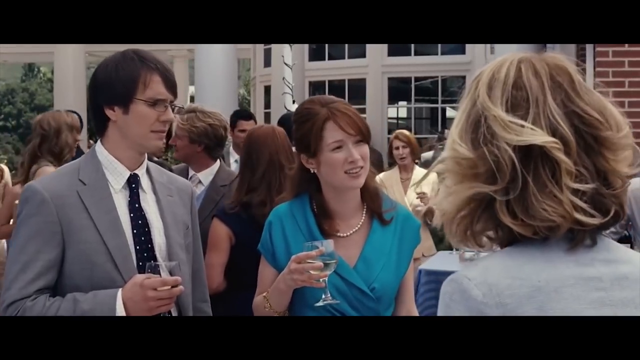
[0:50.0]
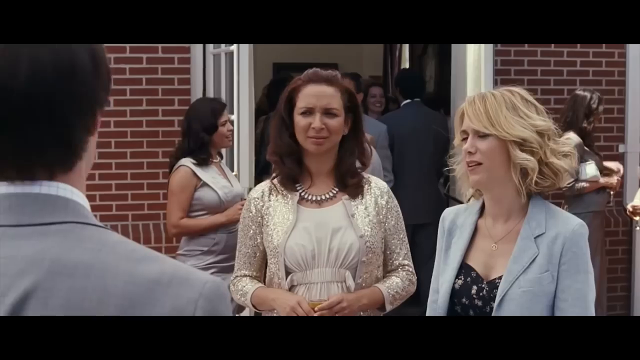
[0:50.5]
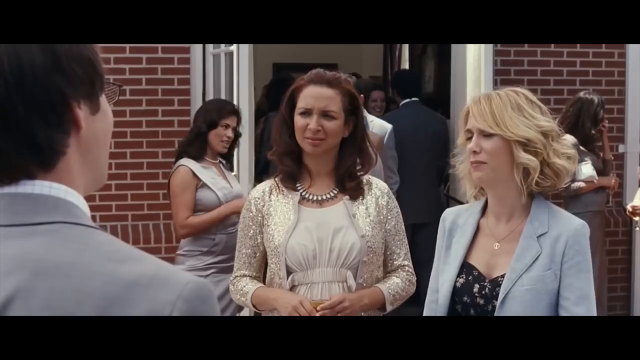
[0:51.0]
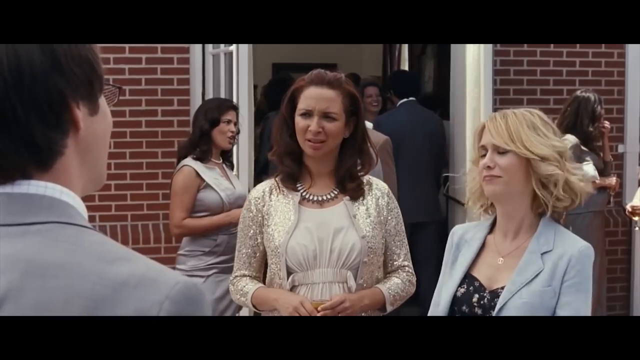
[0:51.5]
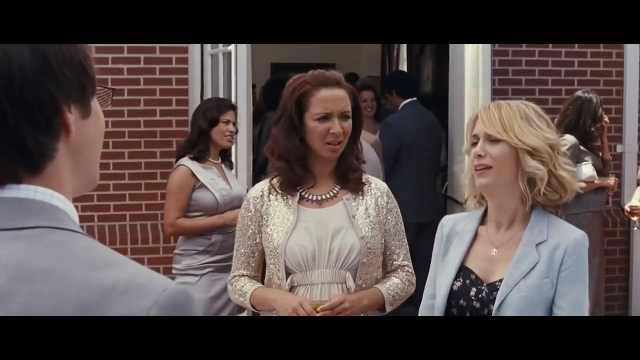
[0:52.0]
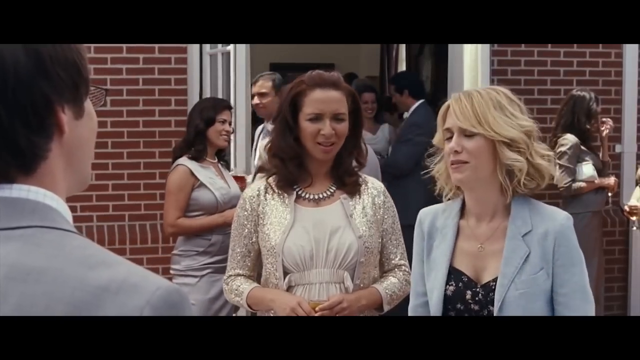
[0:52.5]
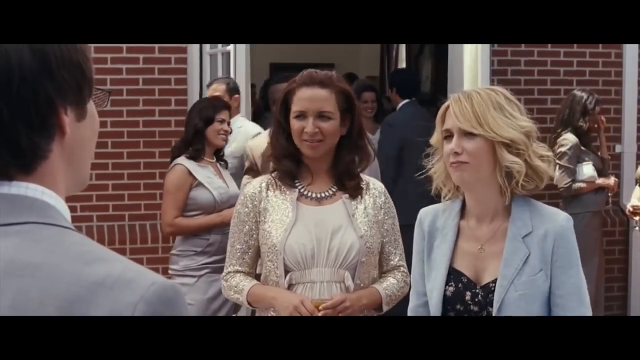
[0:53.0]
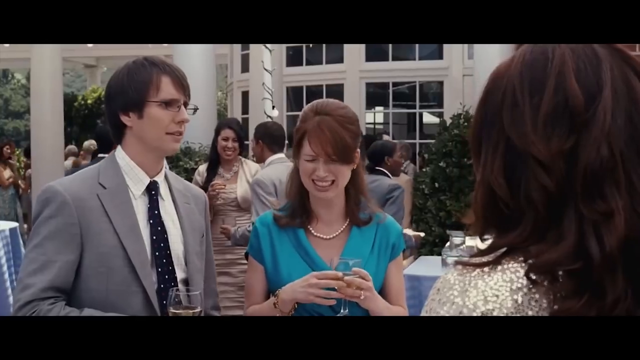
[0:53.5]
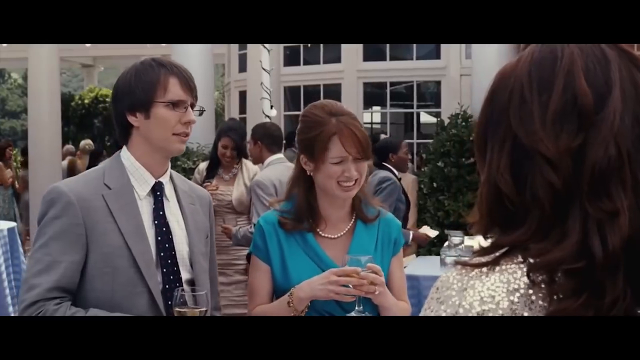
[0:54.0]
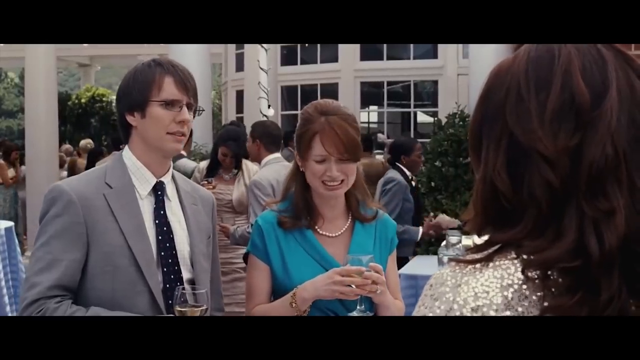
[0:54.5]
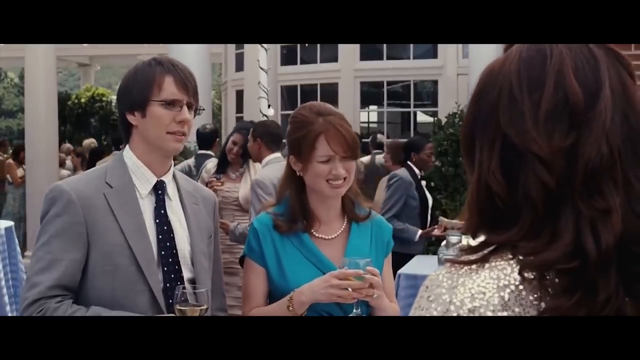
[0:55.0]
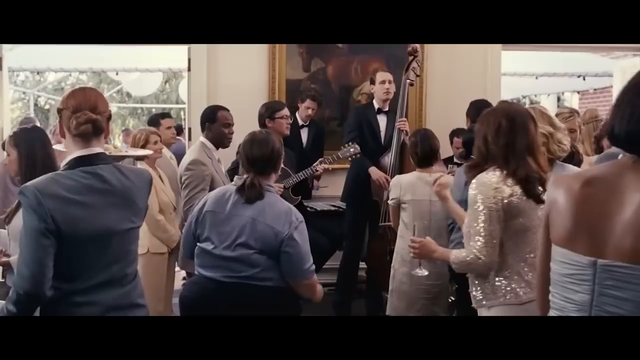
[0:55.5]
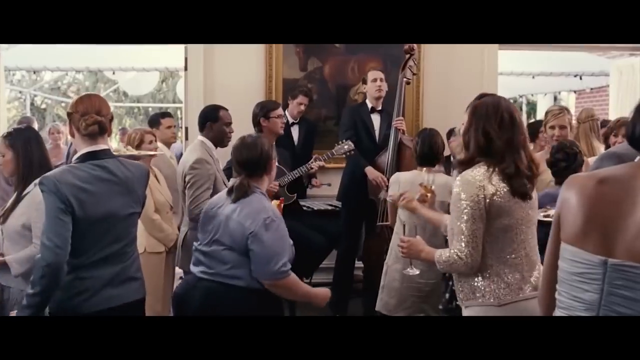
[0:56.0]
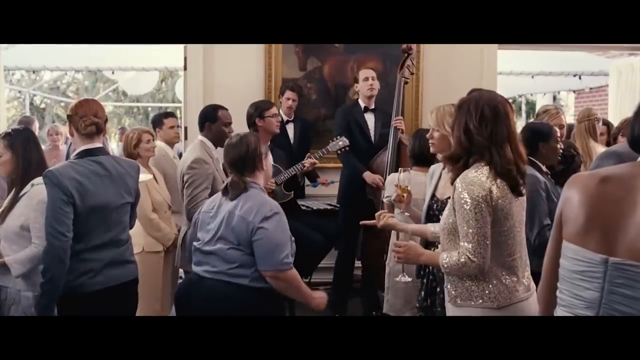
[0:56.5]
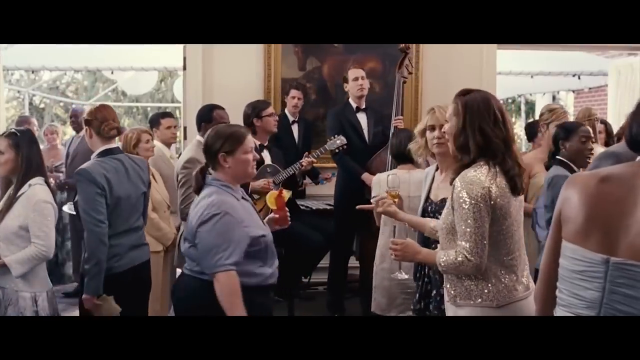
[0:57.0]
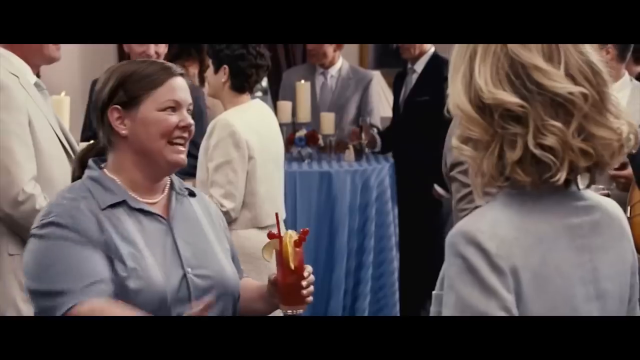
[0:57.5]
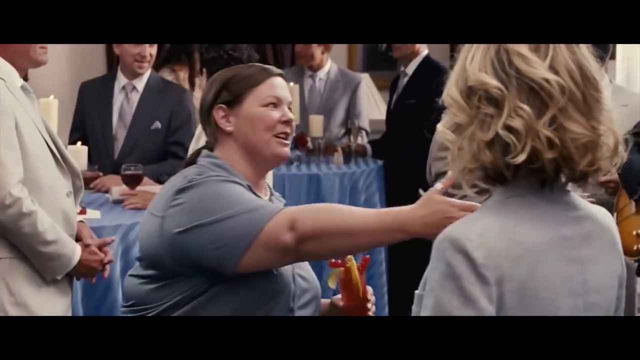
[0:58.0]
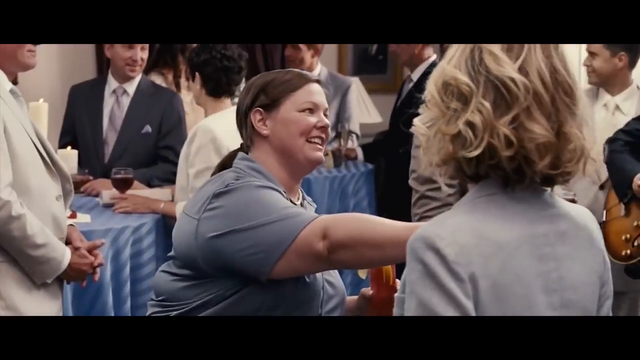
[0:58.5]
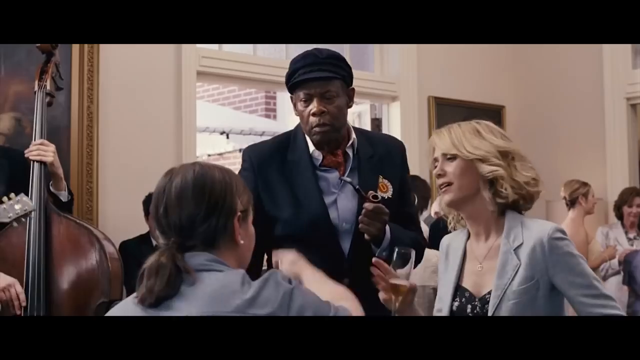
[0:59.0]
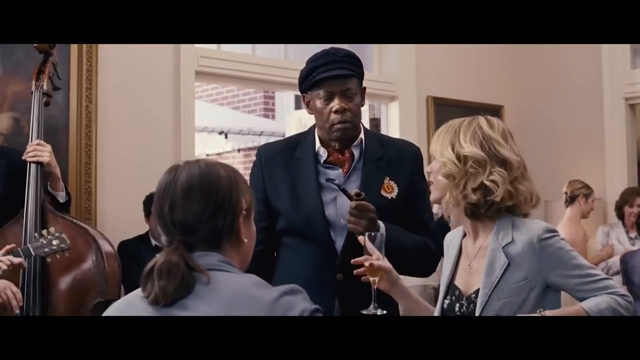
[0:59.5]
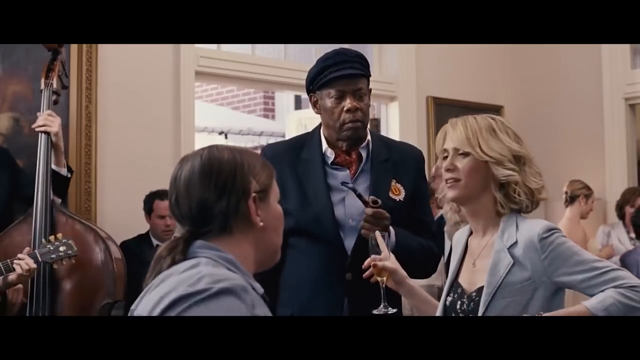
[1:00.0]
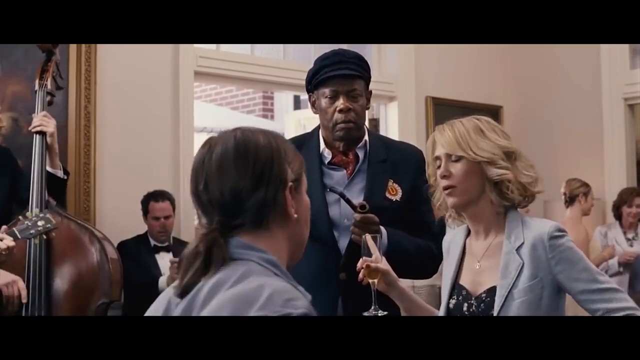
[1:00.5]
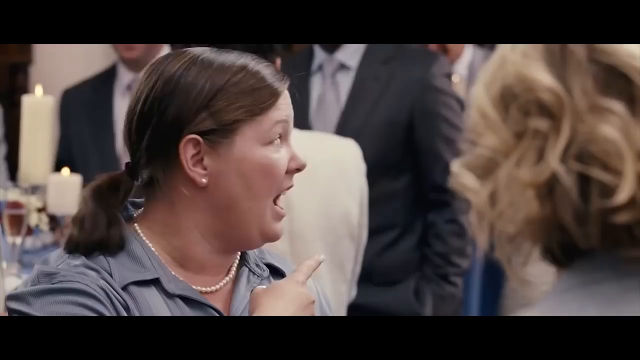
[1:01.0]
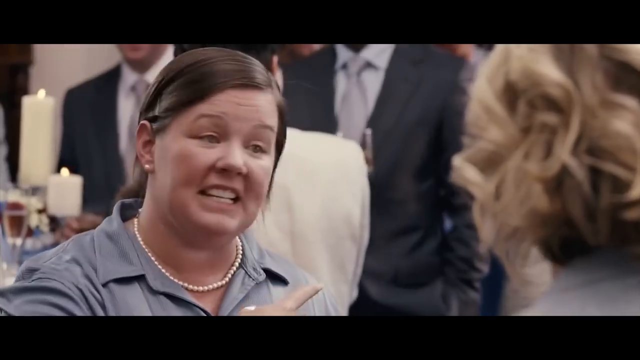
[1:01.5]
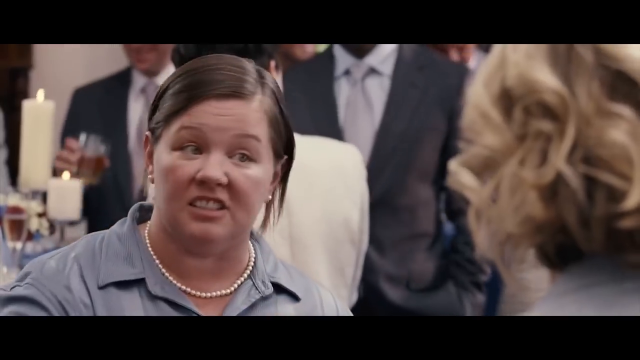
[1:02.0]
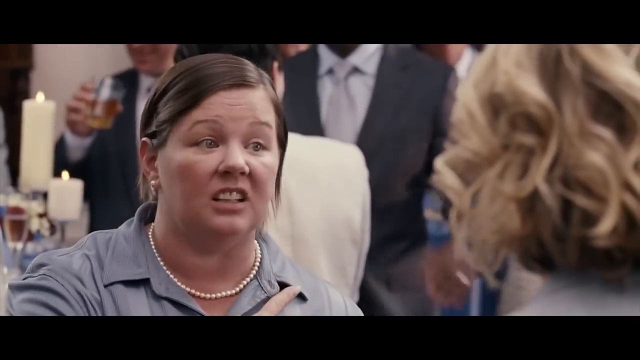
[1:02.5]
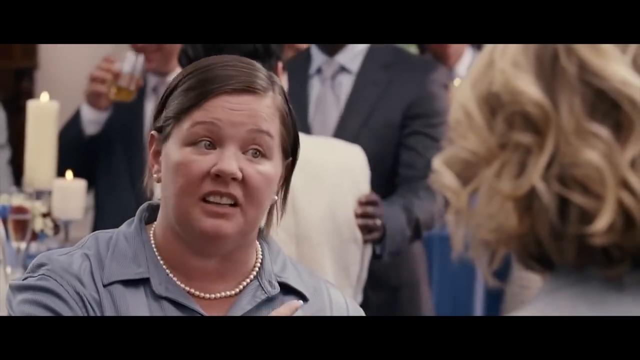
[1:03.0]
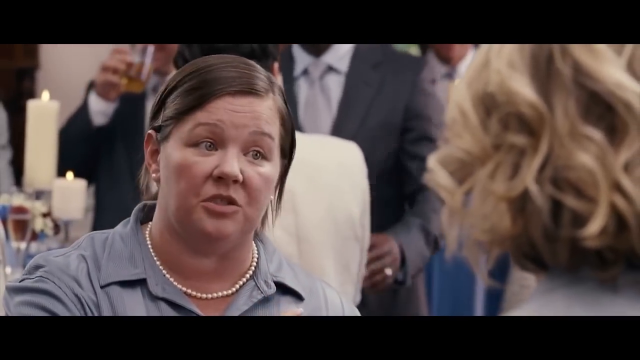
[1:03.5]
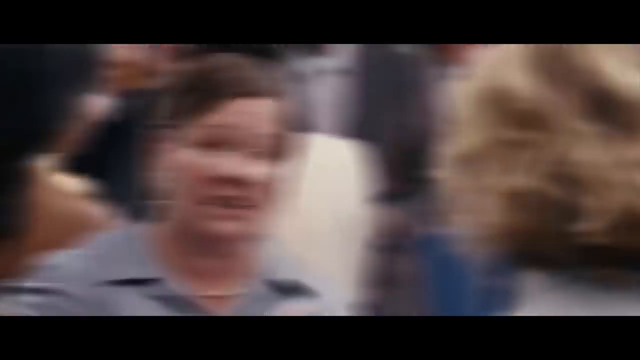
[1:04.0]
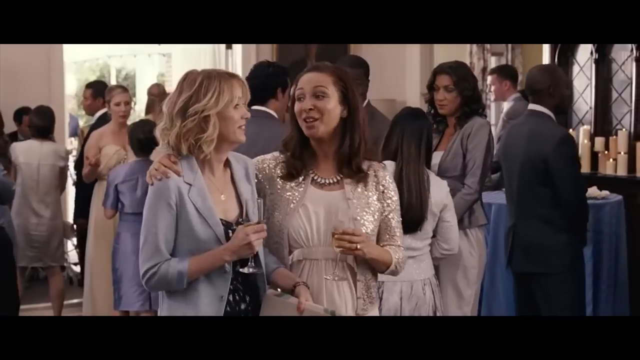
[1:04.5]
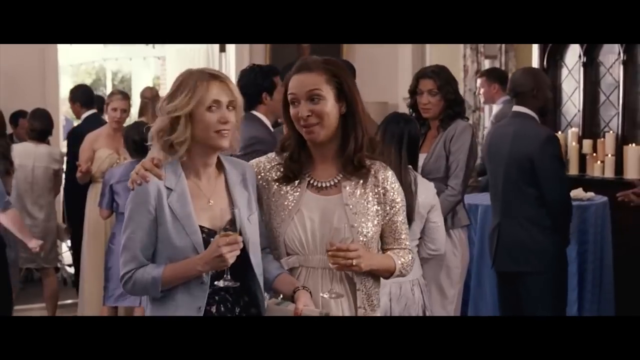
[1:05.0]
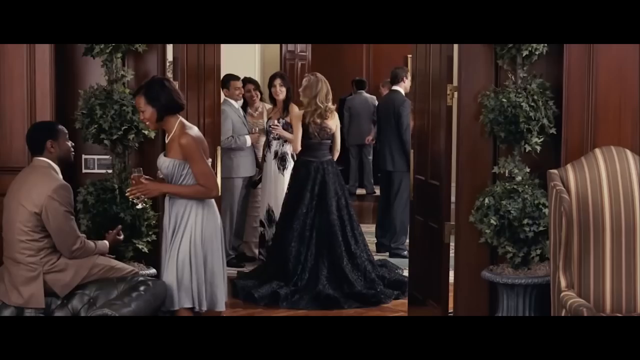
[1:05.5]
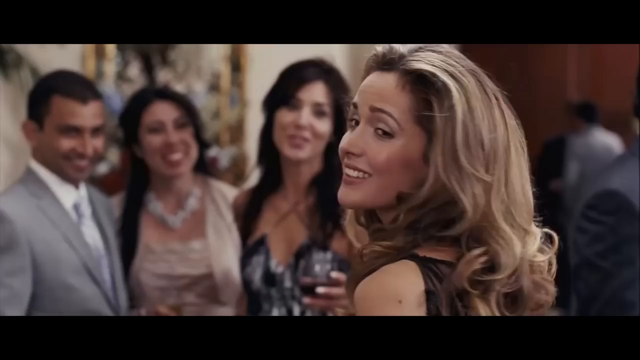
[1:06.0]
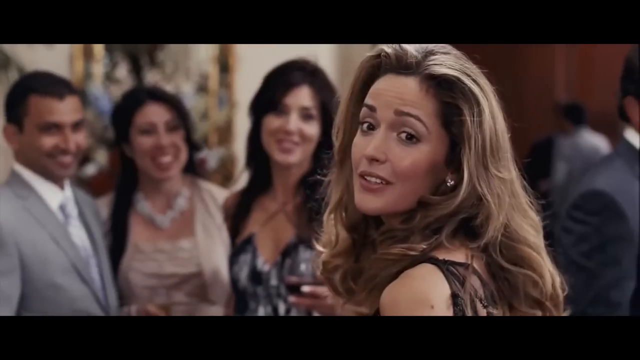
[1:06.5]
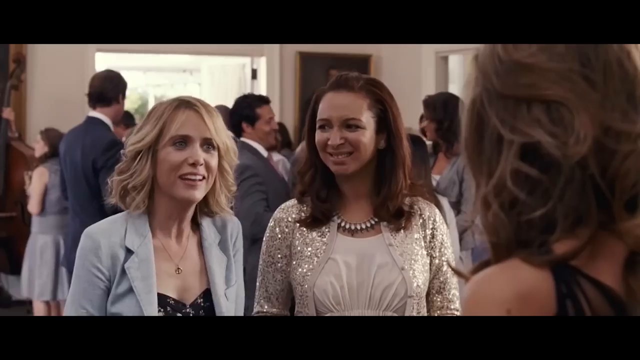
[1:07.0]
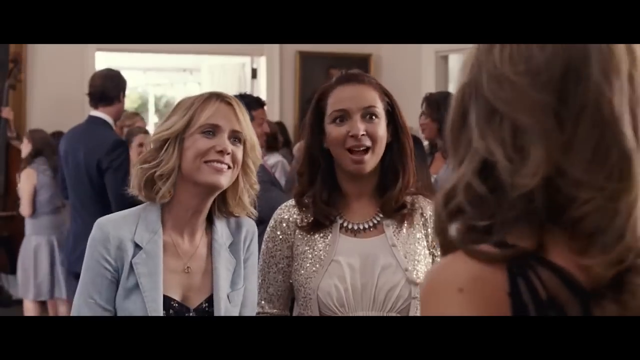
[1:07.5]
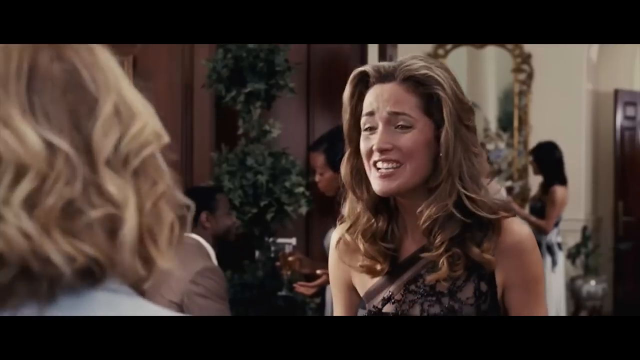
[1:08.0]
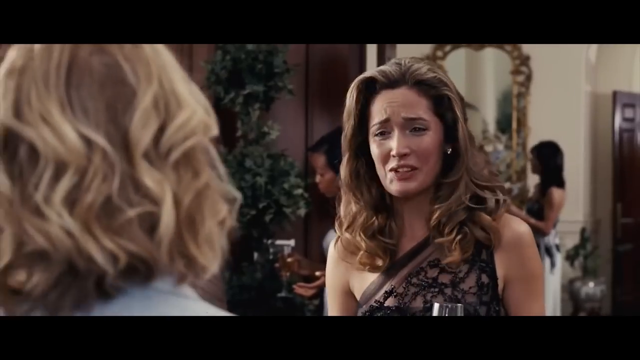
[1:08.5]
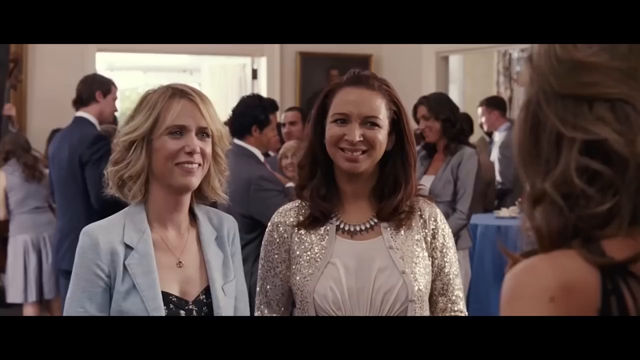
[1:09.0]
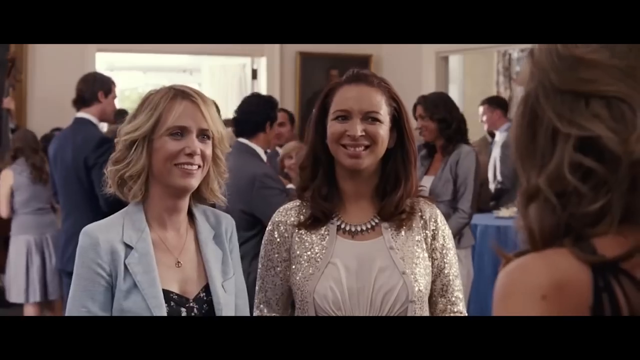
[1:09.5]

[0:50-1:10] Several people talk on a back patio. A woman in a blue dress and the man next to her in a gray suit both hold glasses of wine. Standing across from them are two women, one dressed in a light blue blazer and the other in a white and goldish dress. They all look at each other very confused as they talk. The scene changes to the inside of a ballroom, where a three-piece band plays on the stage: a man plays the guitar, a man plays the upright bass, and someone in the back appears to be playing either a xylophone or drums. The two women talk to another woman in this room, introducing themselves, while other people enter and everyone talks amongst themselves. In another room, the two women see a woman standing through the doorway in the next room, wearing a black dress that flows down onto the ground. She turns around to look at them, and then they are talking together in what looks like maybe a semi-tense exchange, as if they are not exactly friends but perhaps more like frenemies.